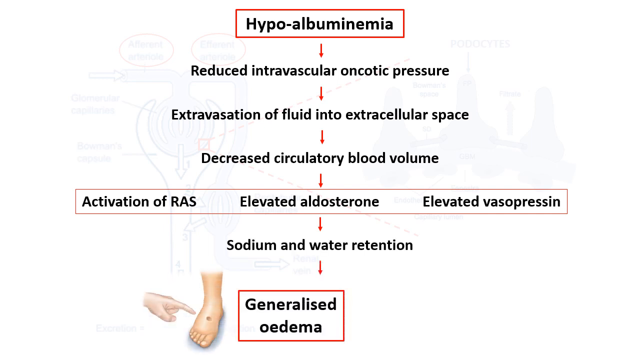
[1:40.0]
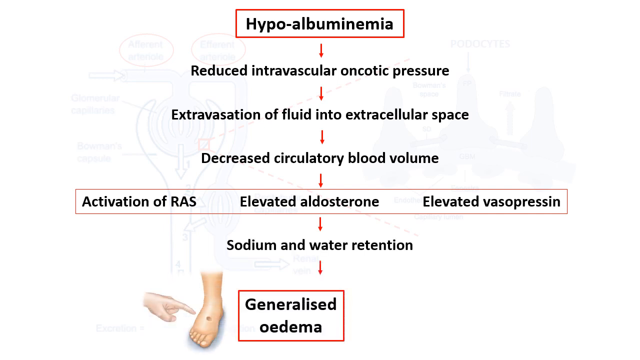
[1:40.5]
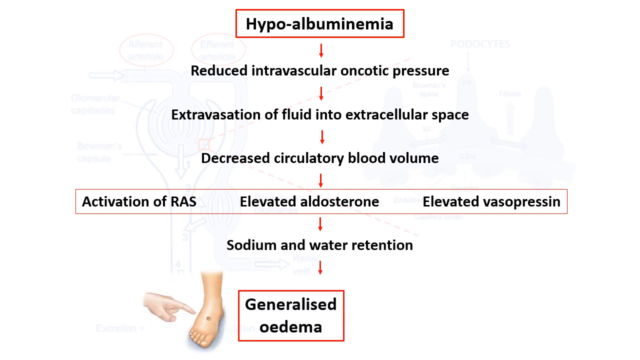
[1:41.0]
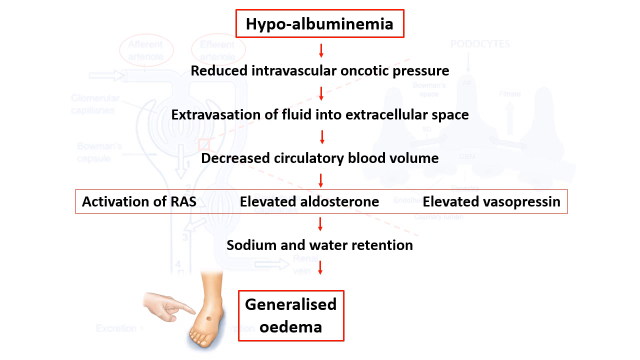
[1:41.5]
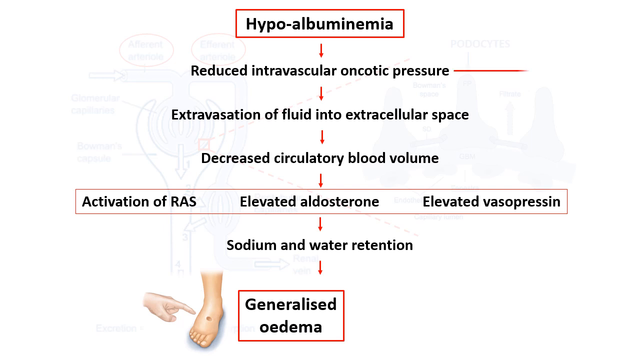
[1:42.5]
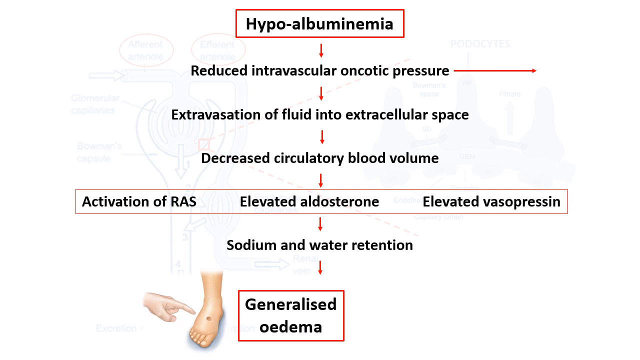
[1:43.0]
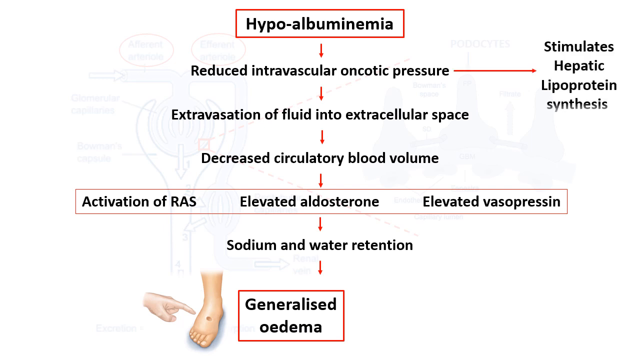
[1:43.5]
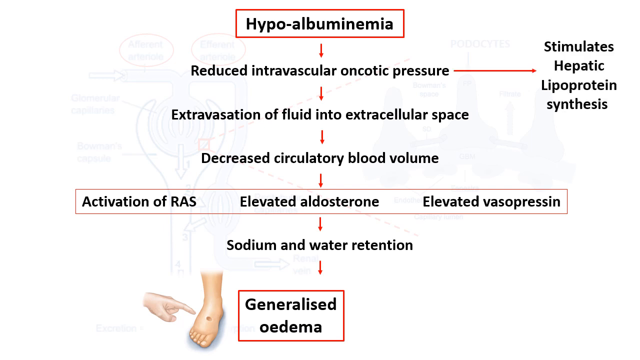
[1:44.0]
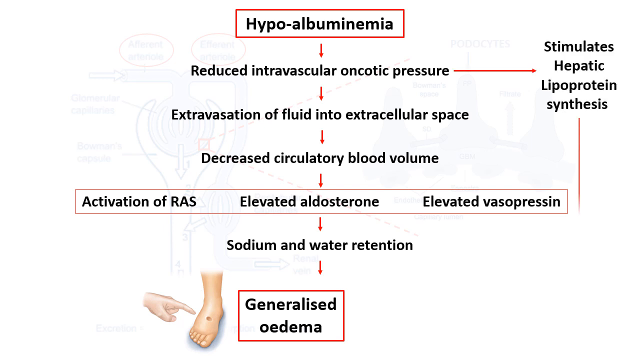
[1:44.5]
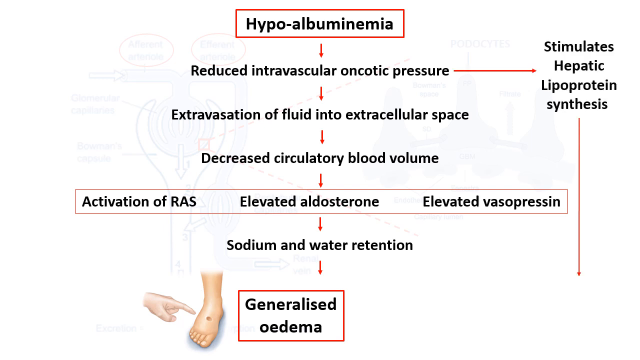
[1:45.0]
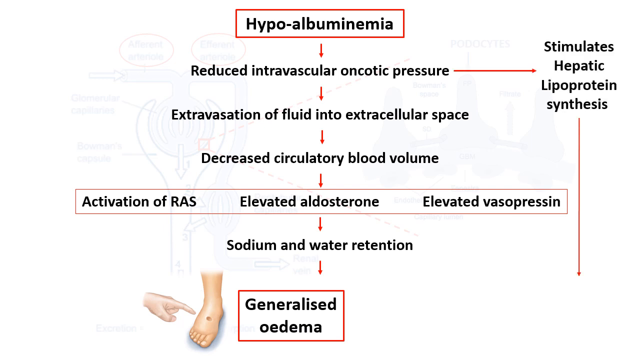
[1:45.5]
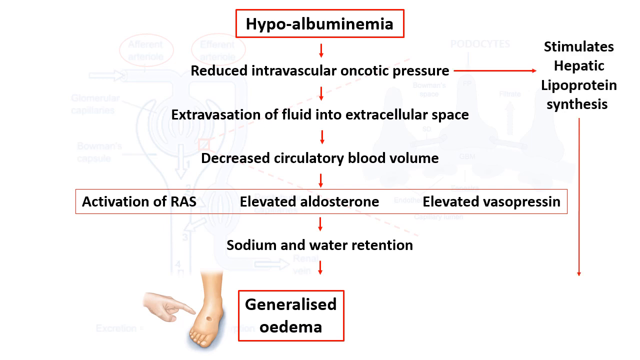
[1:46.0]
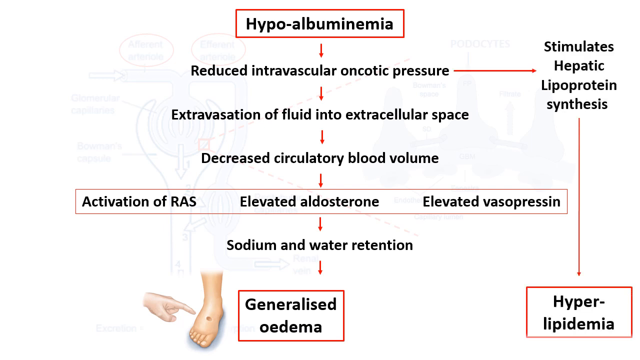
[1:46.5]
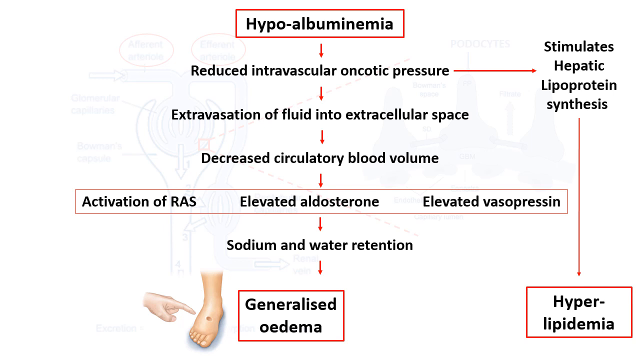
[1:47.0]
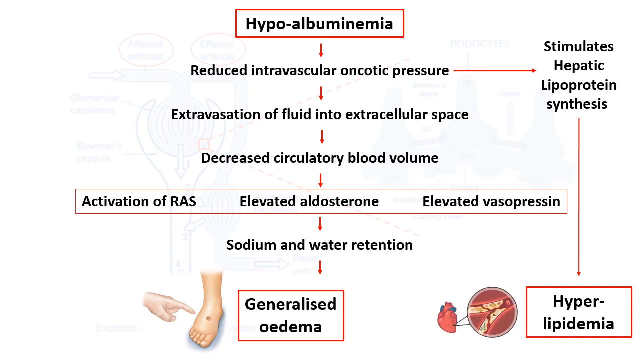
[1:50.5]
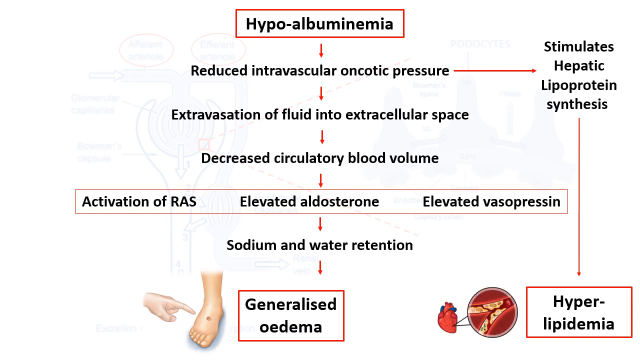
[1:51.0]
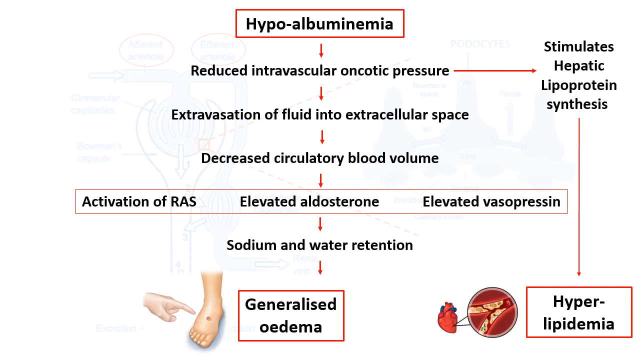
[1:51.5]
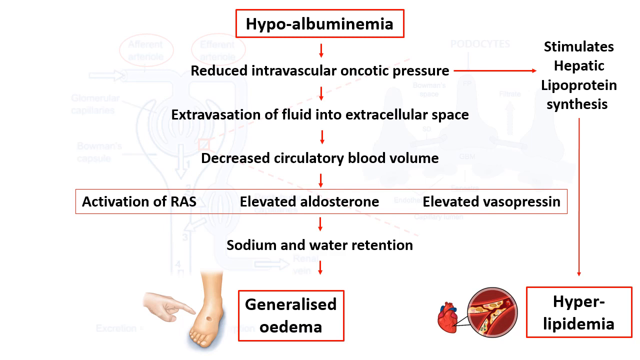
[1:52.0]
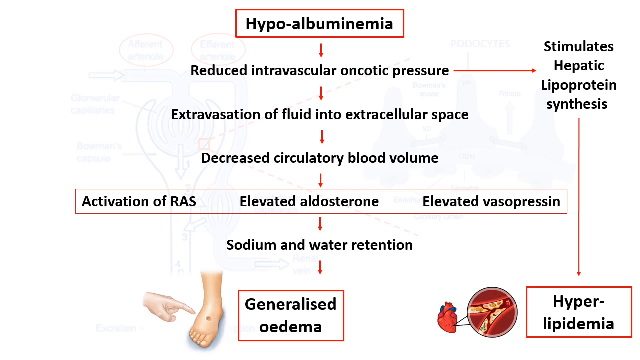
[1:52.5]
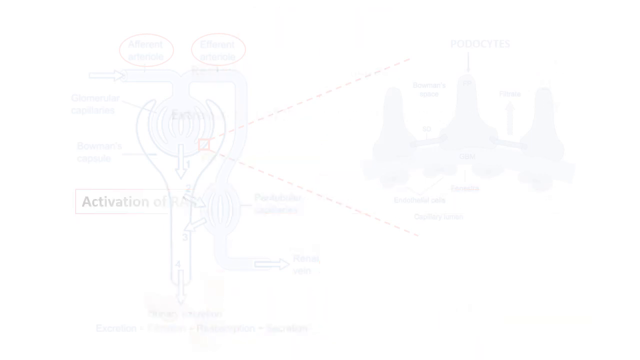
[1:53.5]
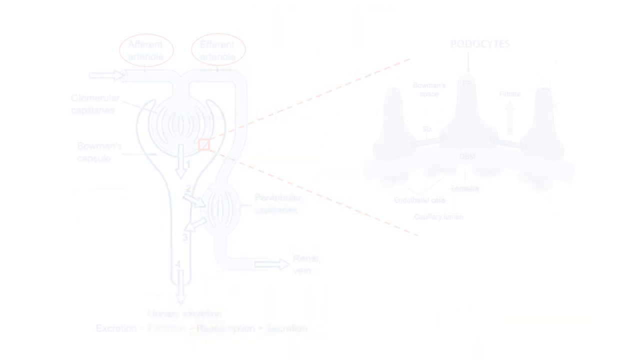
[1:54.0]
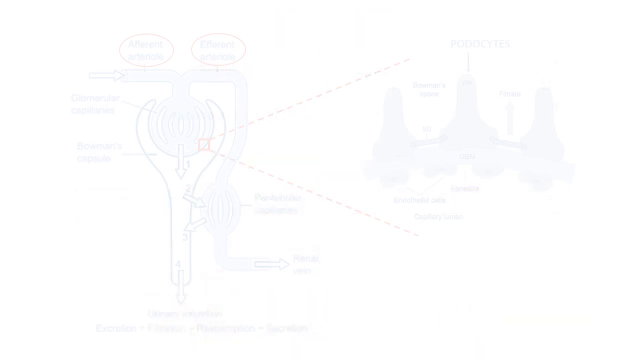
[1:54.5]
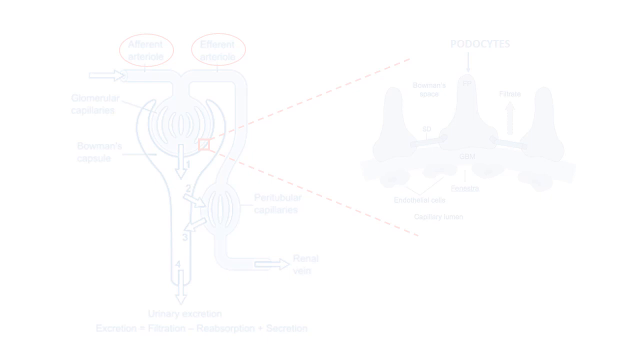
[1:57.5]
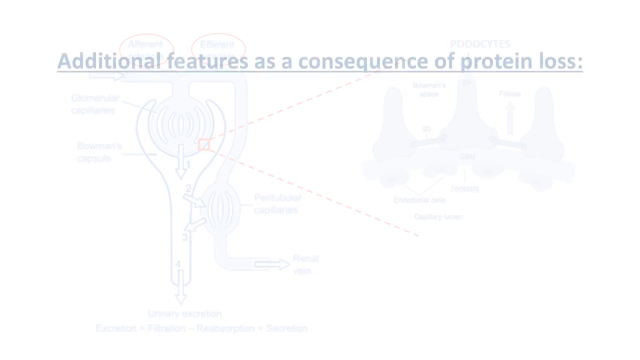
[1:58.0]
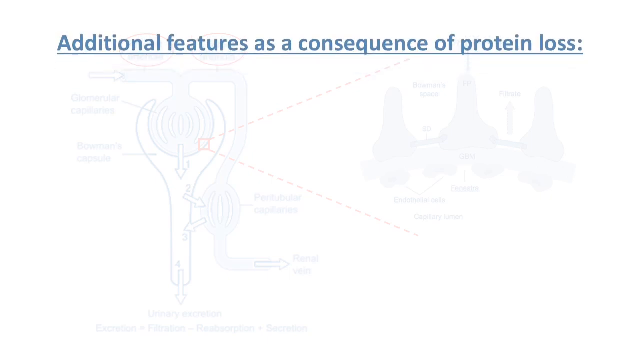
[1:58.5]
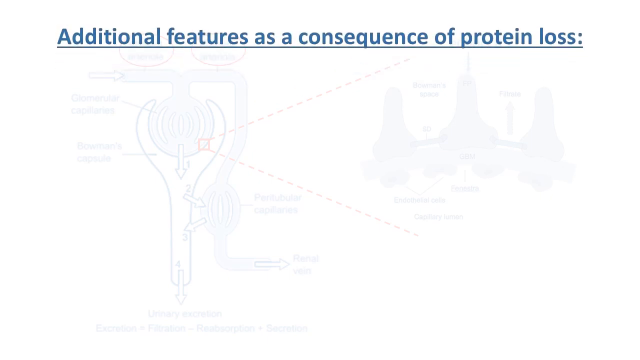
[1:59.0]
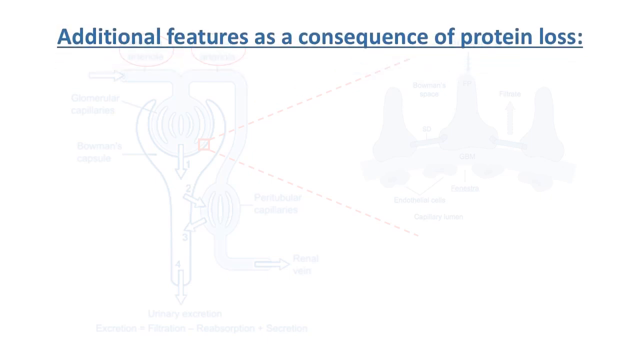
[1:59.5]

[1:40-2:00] The page with "hypoalbuminemia" at the top has arrows pointing down with text between them. At the very bottom, after "sodium and water retention", the arrow down goes to a red outlined rectangle containing "generalized oedema". On the left is the illustration of a foot and a hand with the index finger pointing toward the foot, and there is a small dot on top of the foot. An arrow comes out from the side of "reduced intravascular oncotic pressure", and after it the text "stimulates hepatic lipoprotein synthesis" spells out. An arrow under "synthesis" goes all the way down to a red outlined rectangle containing "hyperlipidemia". To the left of "hyperlipidemia" is a circle showing a resected part of the heart: the heart is on the left, with a ray off of it as if showing a resection, leading to the circle. Next comes a white page with the diagram just barely visible in the background, and at the top, in blue text underlined with a blue line, is "additional features as a consequence of protein loss".